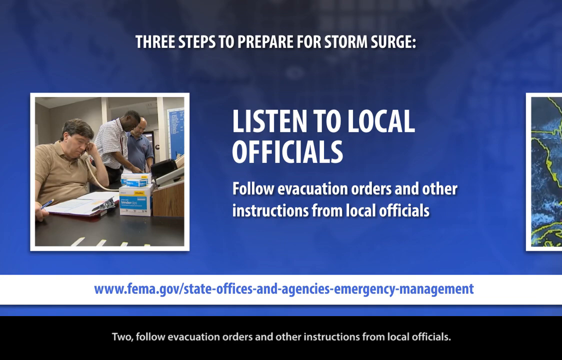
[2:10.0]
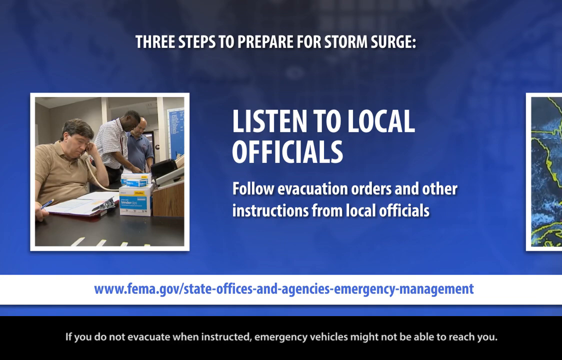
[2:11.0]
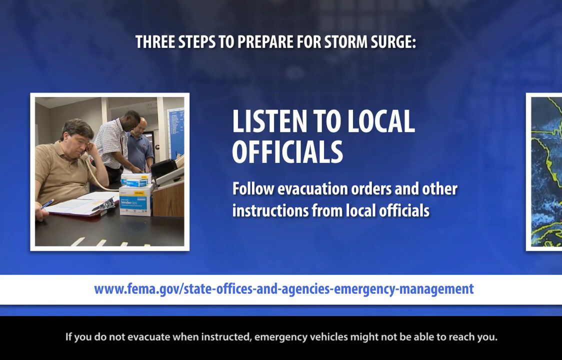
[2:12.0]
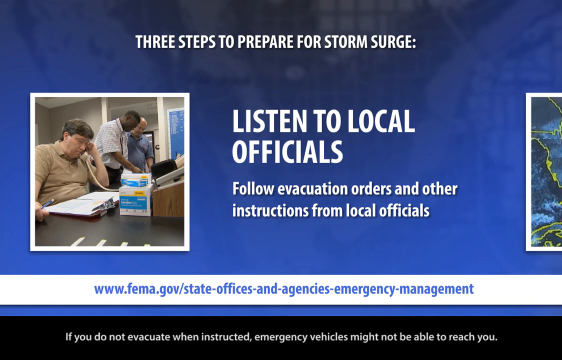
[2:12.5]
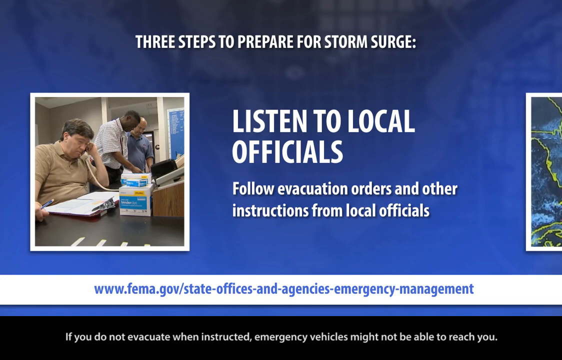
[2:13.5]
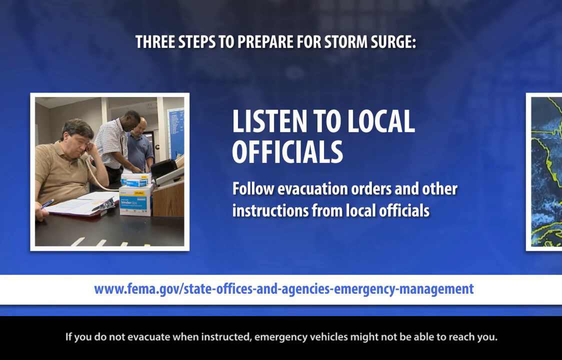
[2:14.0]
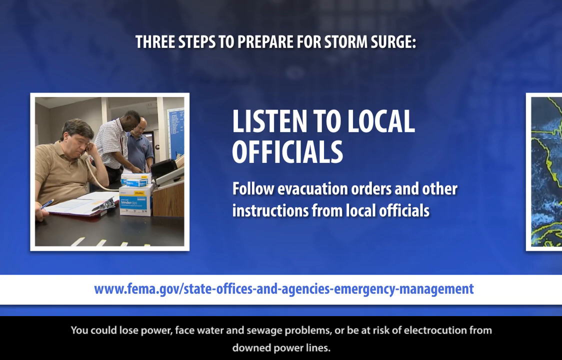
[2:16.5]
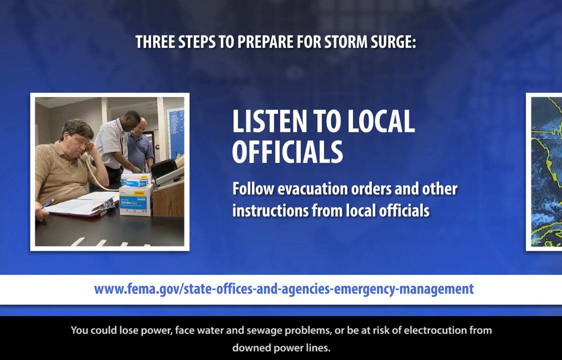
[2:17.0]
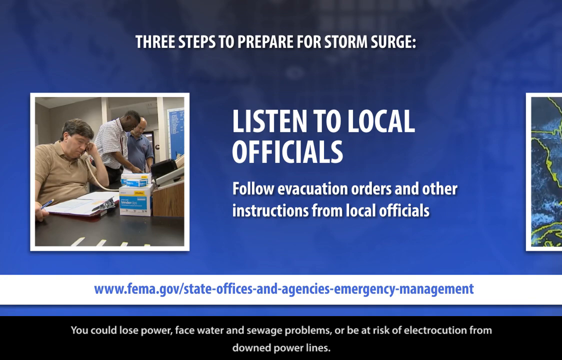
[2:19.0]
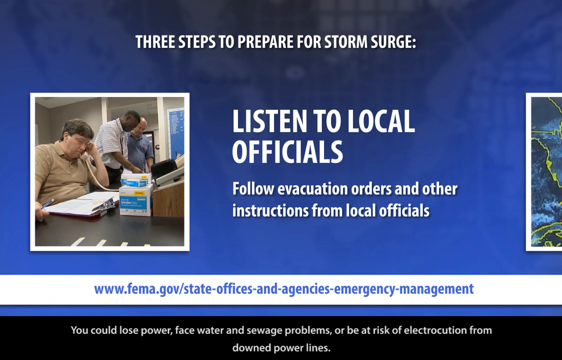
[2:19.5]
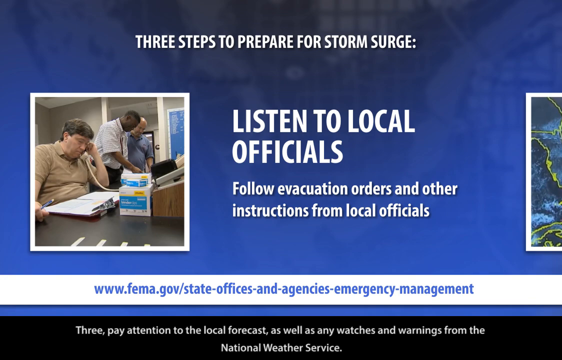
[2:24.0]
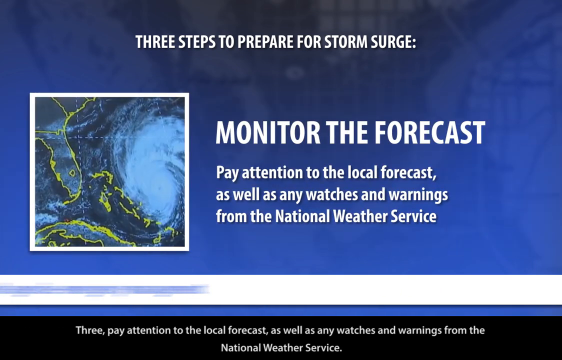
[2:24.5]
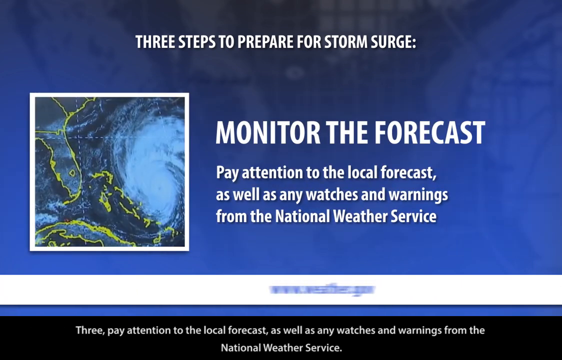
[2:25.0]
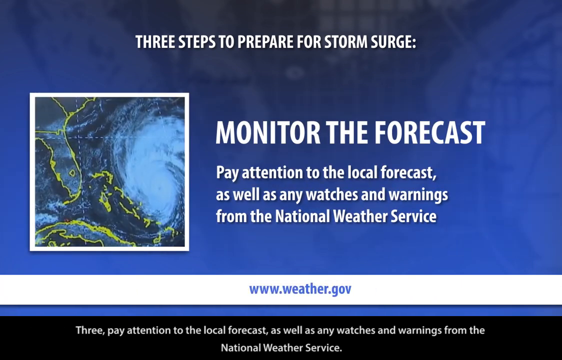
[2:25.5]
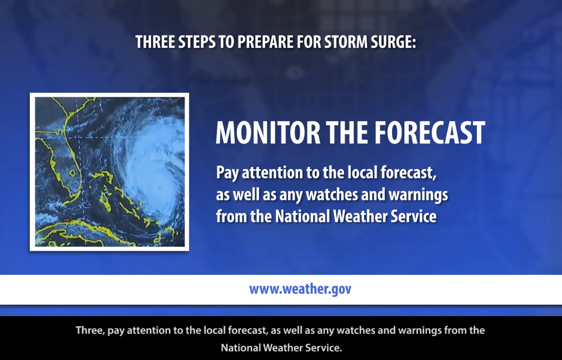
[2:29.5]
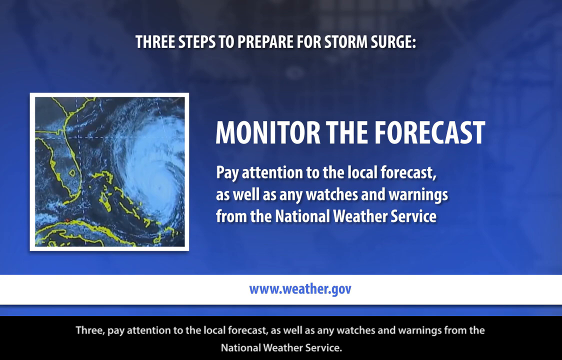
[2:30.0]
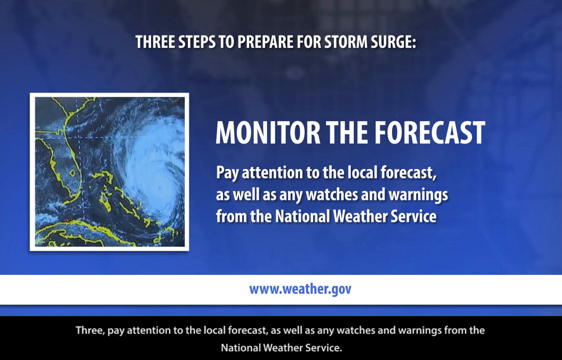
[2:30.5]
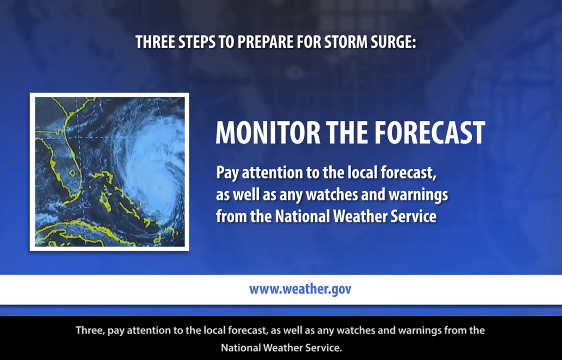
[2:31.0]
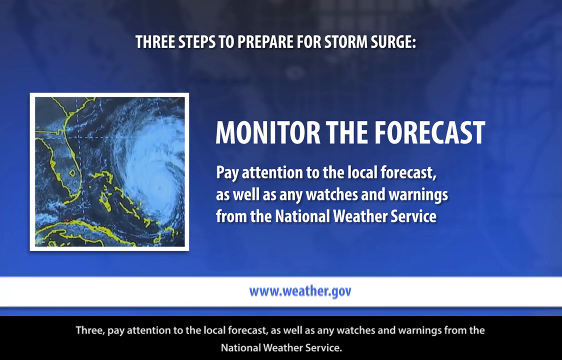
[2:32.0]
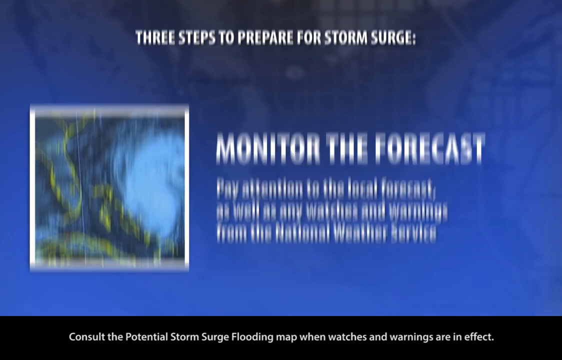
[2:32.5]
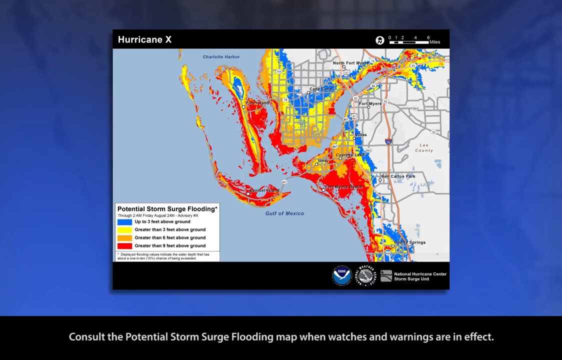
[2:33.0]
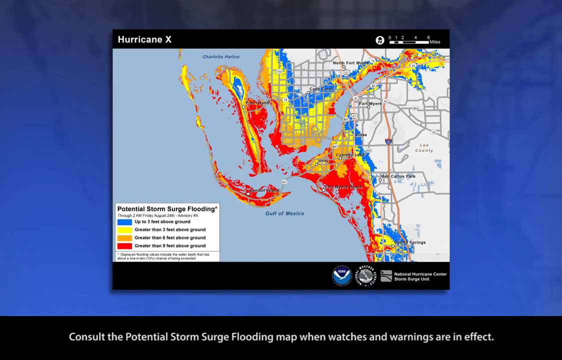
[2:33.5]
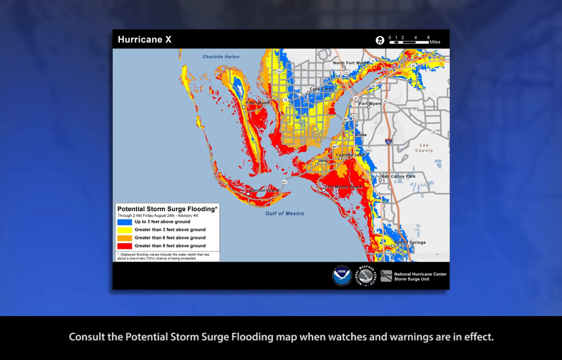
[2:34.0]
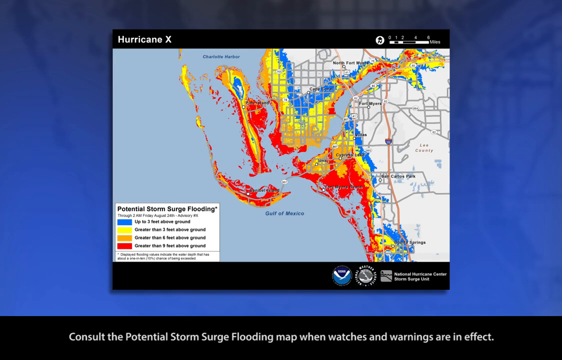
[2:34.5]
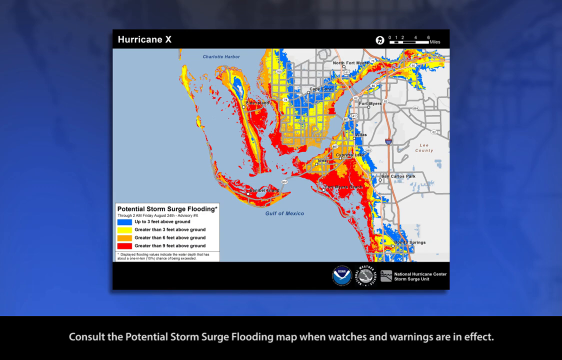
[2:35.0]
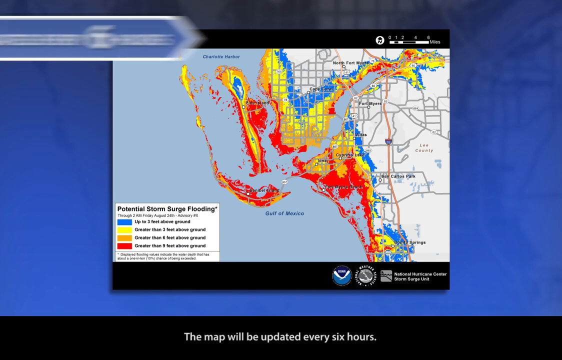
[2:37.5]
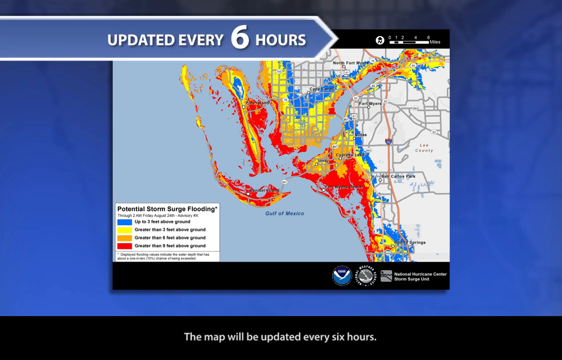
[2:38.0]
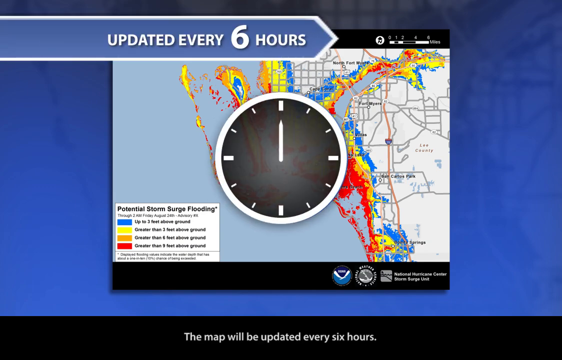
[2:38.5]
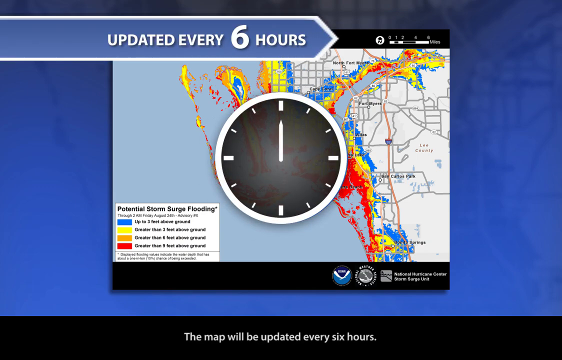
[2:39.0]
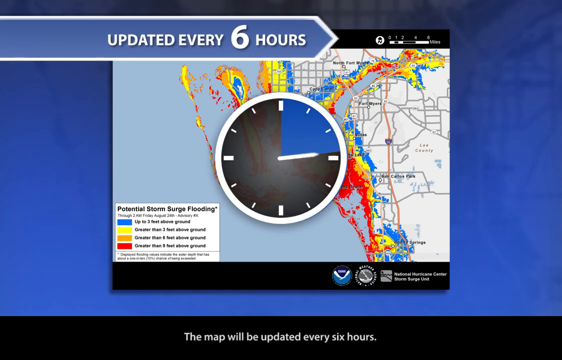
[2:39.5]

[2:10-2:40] Text reads "three steps to prepare for storm surge" and "Listen to local officials, follow evacuation orders, and other instructions from local offices." The men in the office appear: a man in a brown shirt holds a phone and looks at two clipboards in front of him, while a man in a blue shirt and a man in a white button-down shirt look at something in front of them. Underneath it says "www.fema.gov/state-offices-and agencies-emergency-management." A blue screen with white lettering follows, with "three steps to prepare for storm surge" on top, then "monitor the forecast" and "Pay attention to the local forecast, as well as any watches and warnings from the National Weather Service." Below is a white banner that says "www.weather.gov."